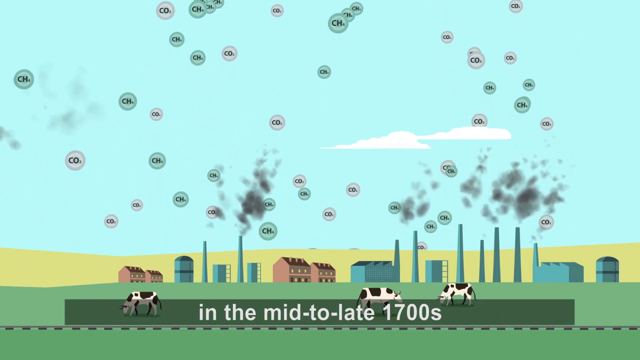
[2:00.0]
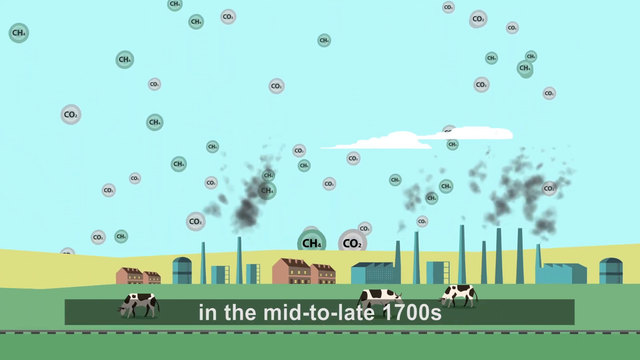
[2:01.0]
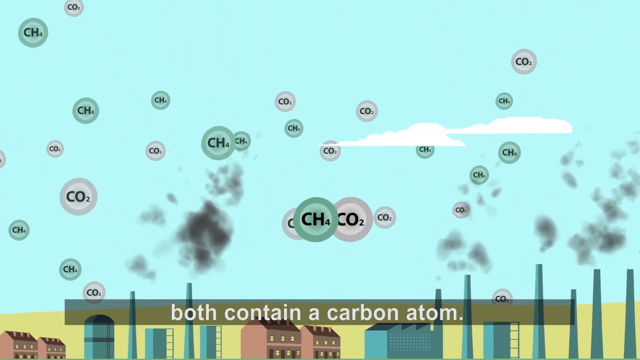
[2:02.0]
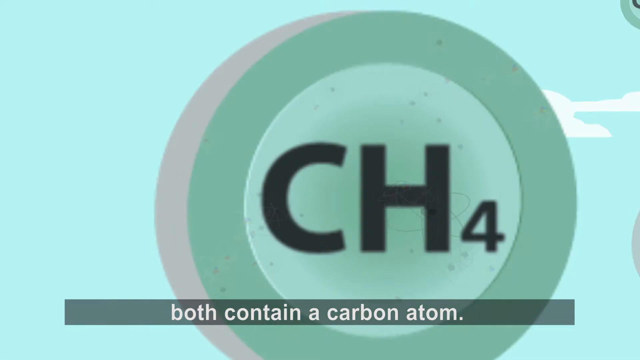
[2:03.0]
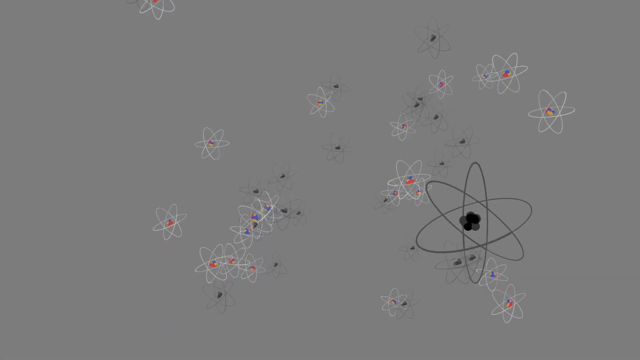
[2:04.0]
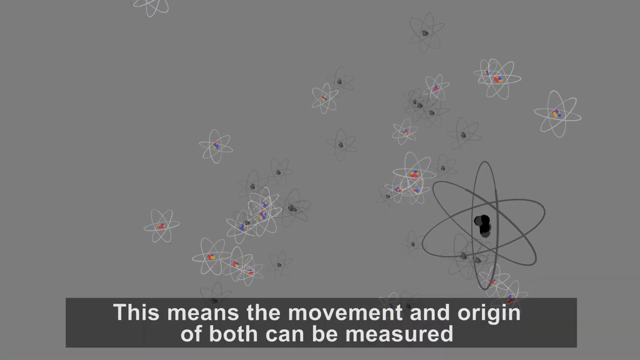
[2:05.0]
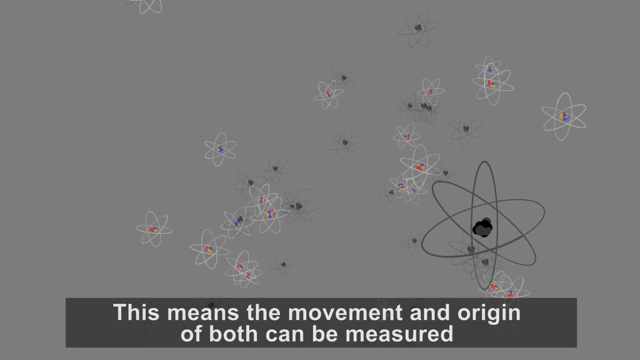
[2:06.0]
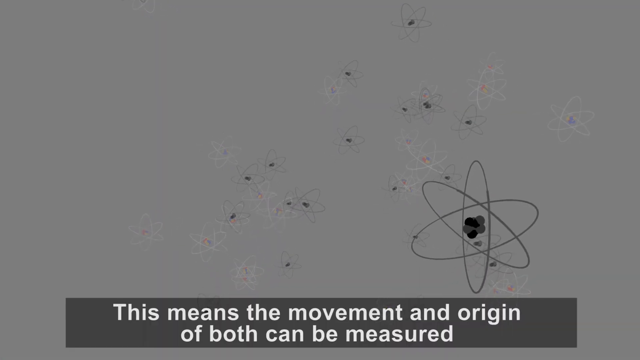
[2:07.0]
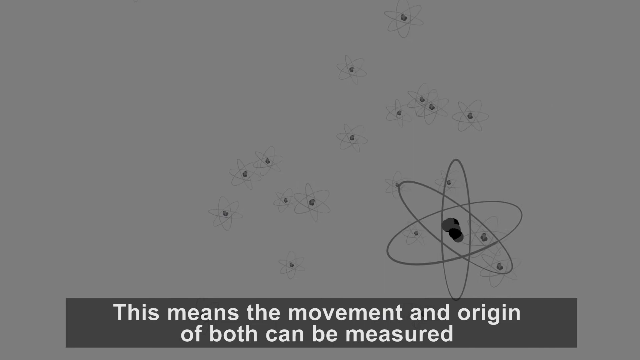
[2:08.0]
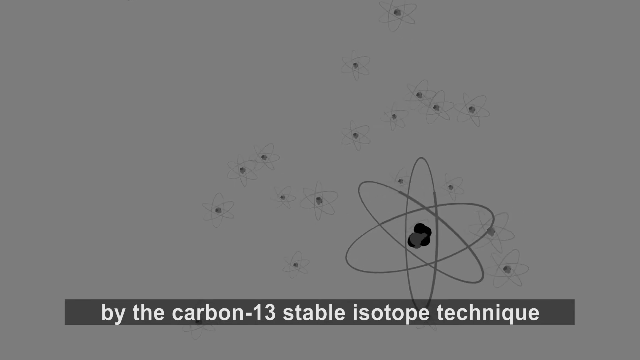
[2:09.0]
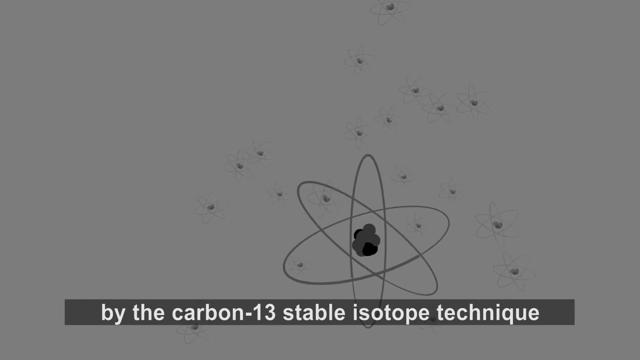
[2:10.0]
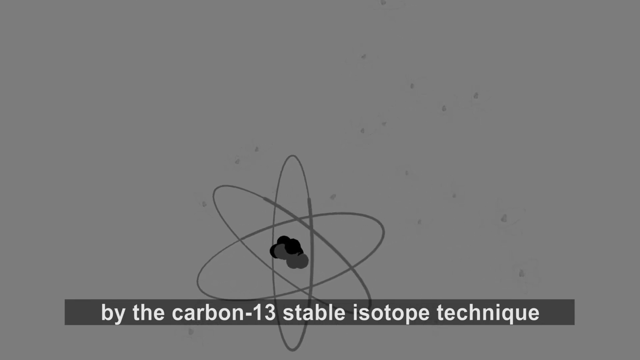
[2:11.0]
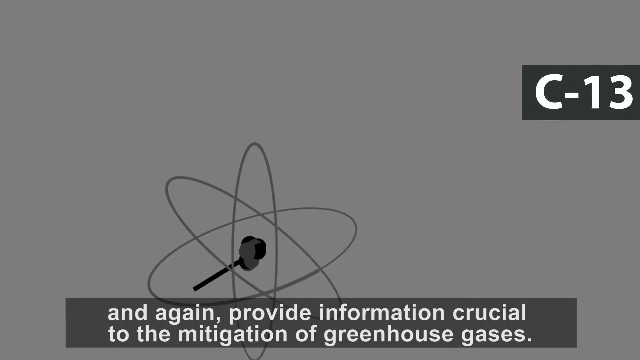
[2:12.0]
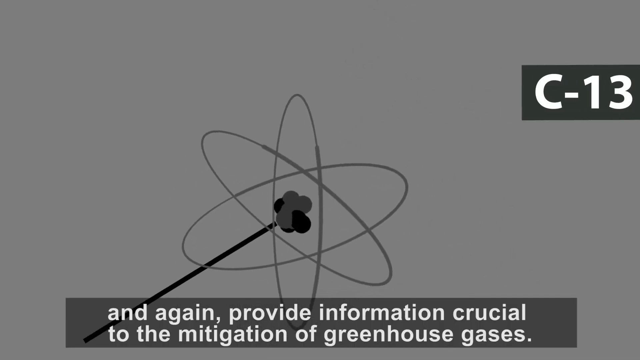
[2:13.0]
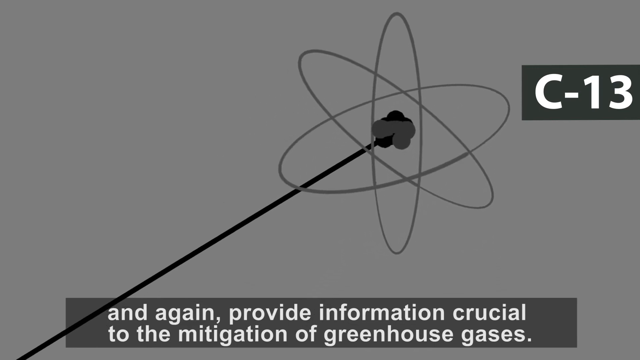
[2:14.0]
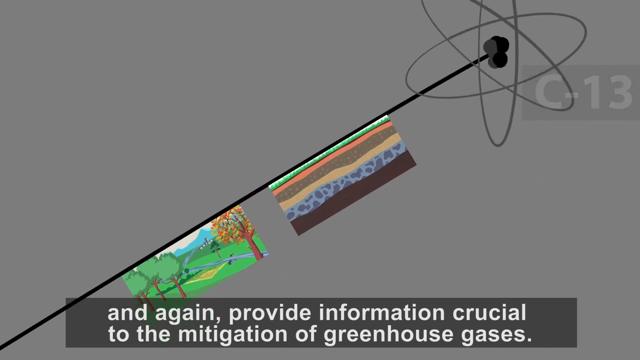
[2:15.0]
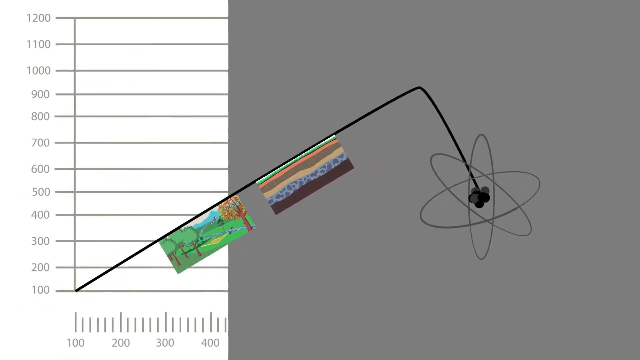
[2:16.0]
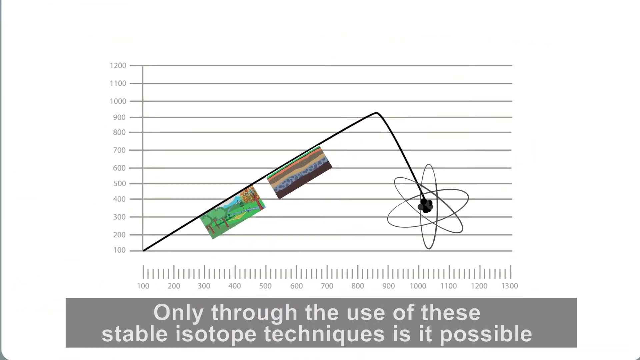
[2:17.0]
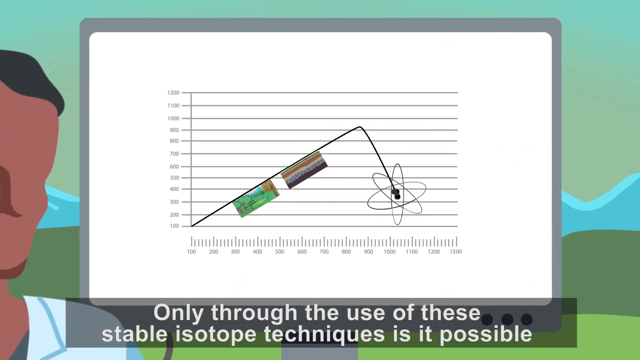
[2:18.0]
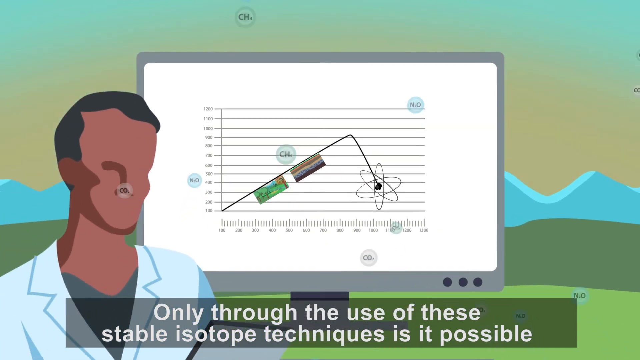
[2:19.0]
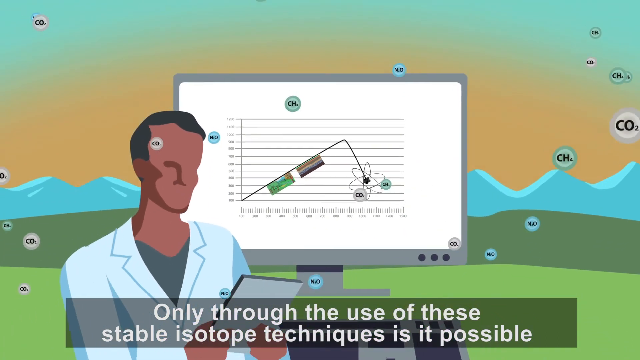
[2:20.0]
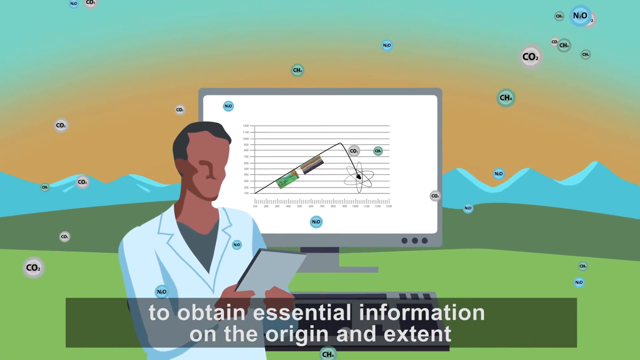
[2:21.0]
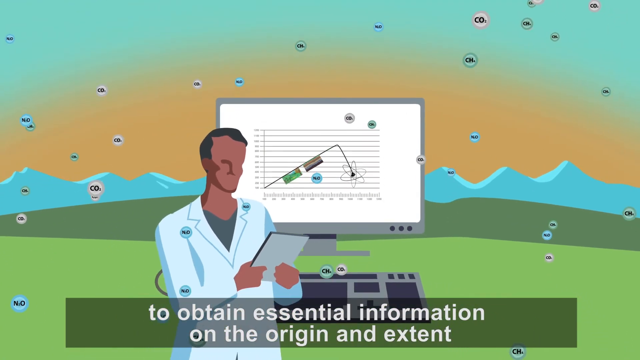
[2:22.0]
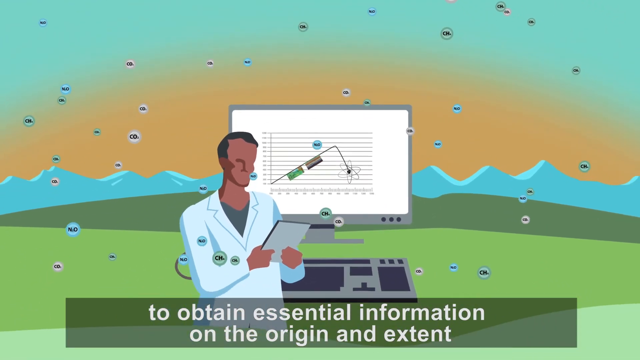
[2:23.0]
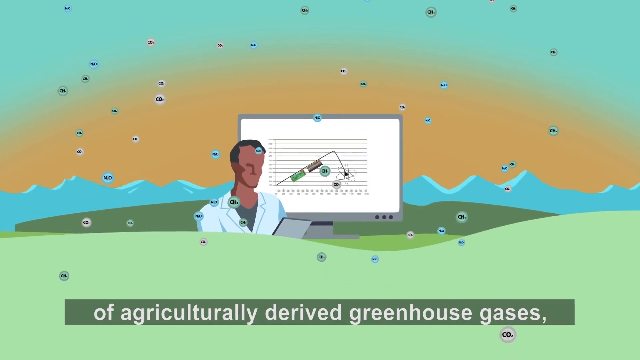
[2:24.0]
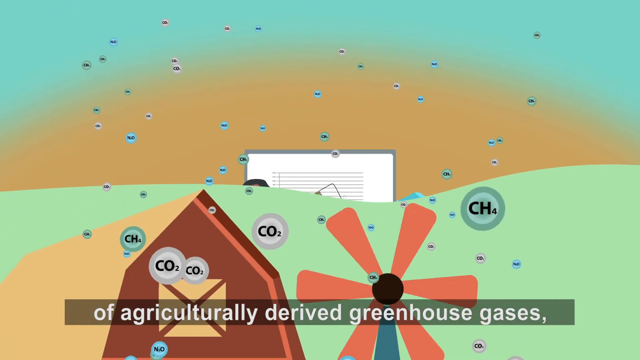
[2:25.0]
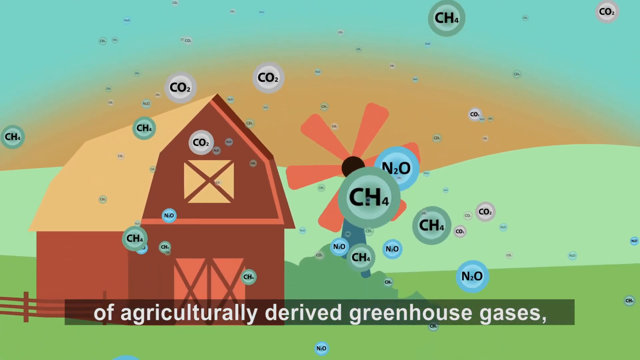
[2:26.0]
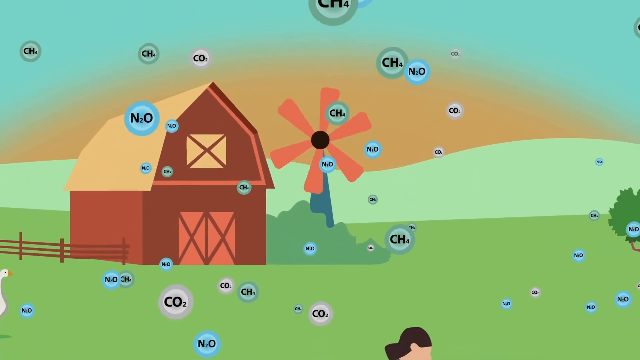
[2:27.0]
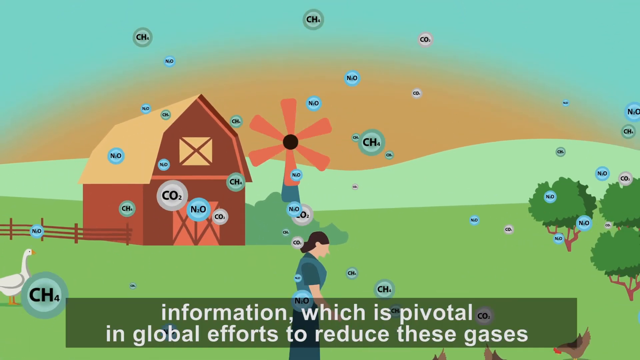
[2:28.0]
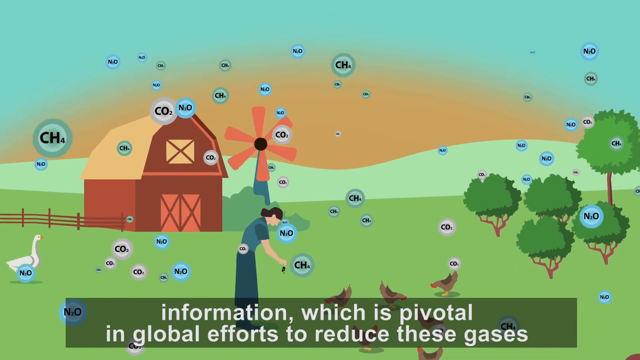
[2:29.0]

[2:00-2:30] Circles come out of the chimneys or roofs of the factories, which look kind of greenish, with some brown houses in between them. The smoke is dark gray. Chemicals come out, such as CO2 with a gray background and a green one labelled CH, possibly CH or CH2. Cows are on the grassland. Text reads "mid-to-late 1700s", then "both contain a carbon atom. This means that the movement or origin of both can be measured by the carbon-13 stable isotope technique." Later text reads "Only through the use of these stable isotope techniques is it possible to obtain essential information on the origin and extent of agriculturally-derived greenhouse gases."